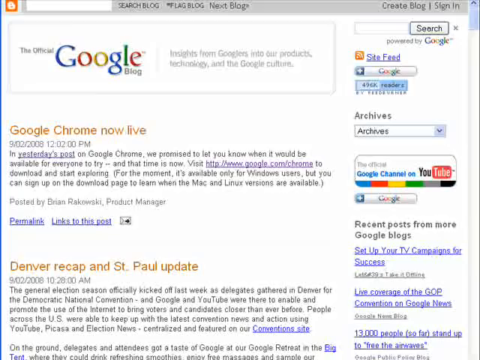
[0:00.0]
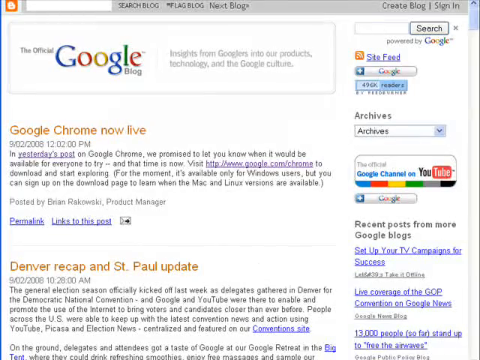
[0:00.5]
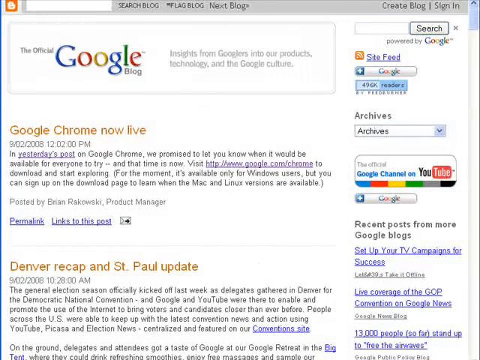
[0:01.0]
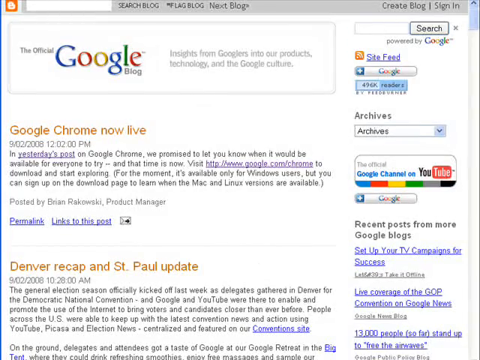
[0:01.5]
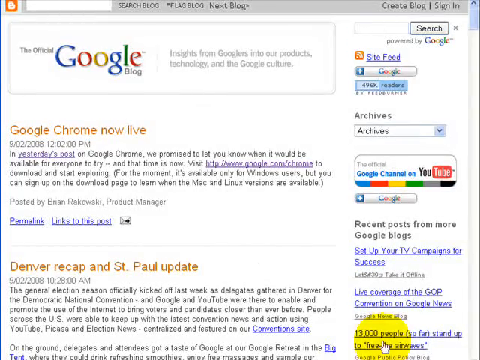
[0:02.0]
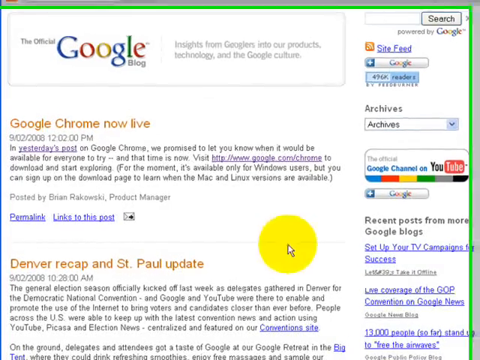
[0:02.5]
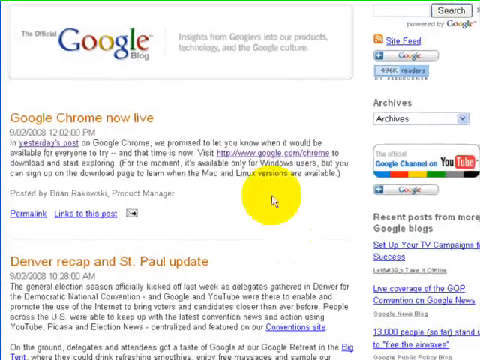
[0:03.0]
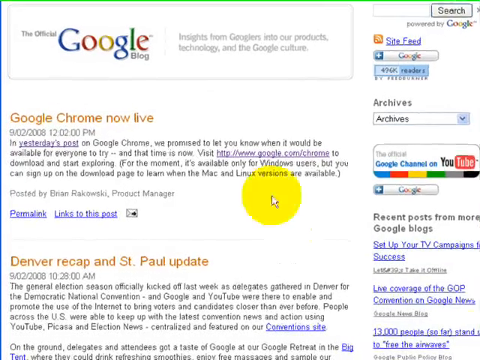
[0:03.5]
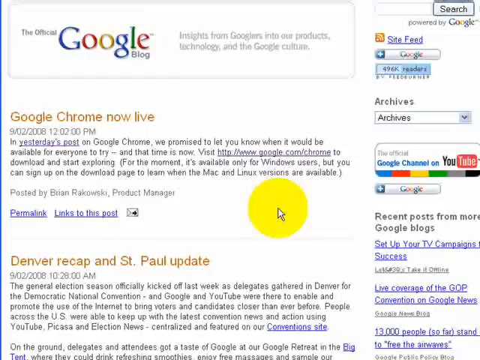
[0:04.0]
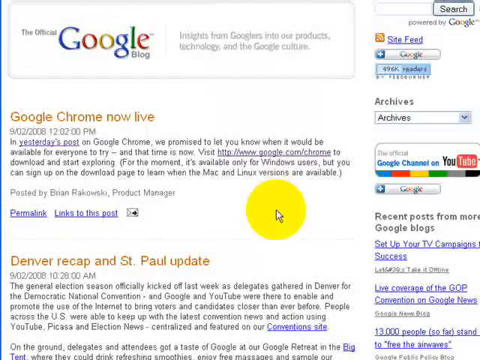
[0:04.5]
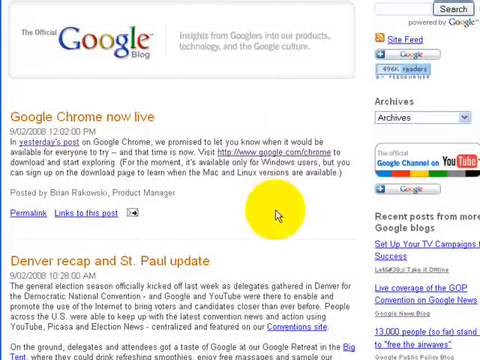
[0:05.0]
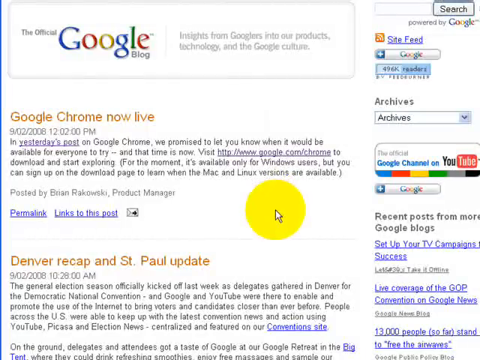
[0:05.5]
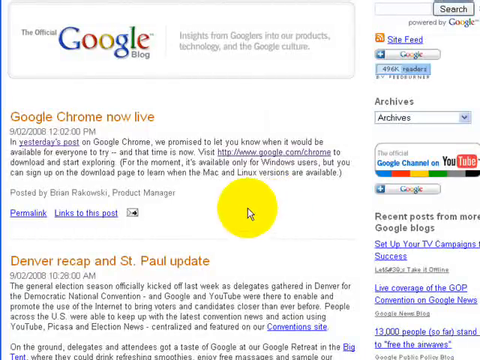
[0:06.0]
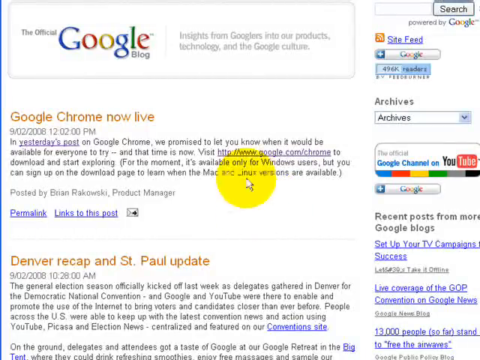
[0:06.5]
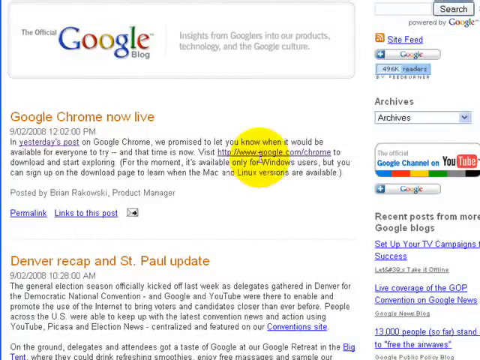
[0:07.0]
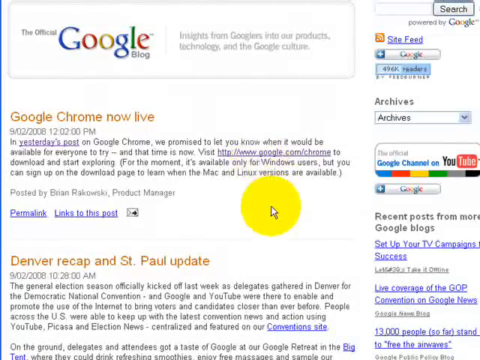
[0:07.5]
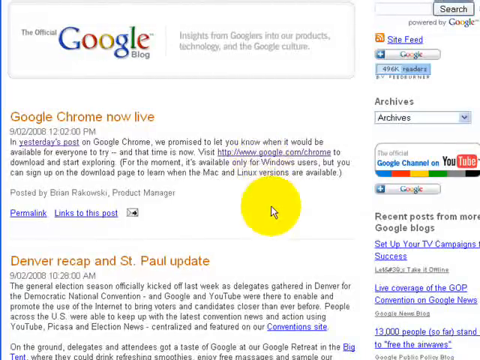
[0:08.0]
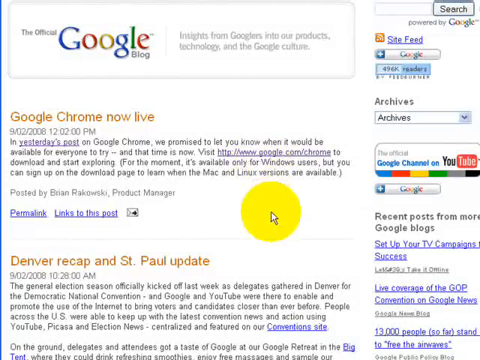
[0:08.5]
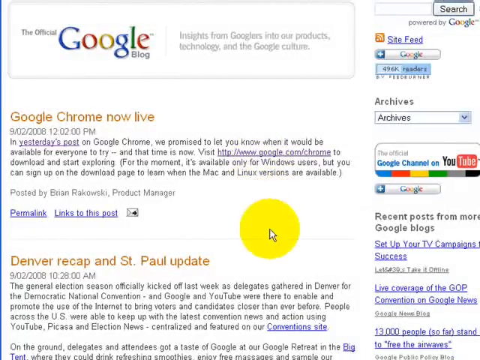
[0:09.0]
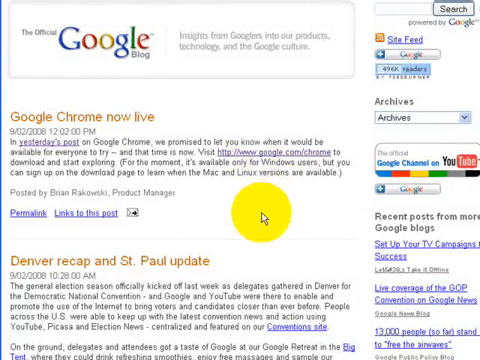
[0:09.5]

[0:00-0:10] A Google search page appears, apparently a search page within Blogger. Text at the top reads "the official Google blog," and the page is possibly someone's personal web page. Posted articles are listed; one is titled "Google Chrome now live" and another "Denver recap and St. Paul update." Links are to the right of the articles. The mouse pointer, which has a large yellow circle around it to make it easier to see, moves around the page. It moves up to a link on the first article, then back down toward the center of the page.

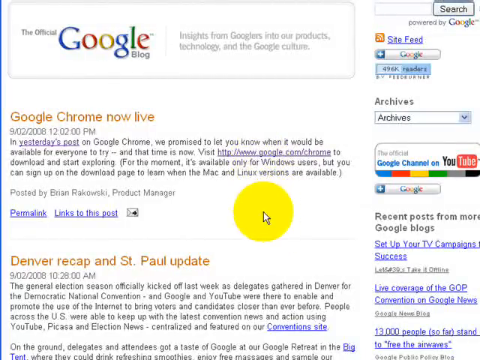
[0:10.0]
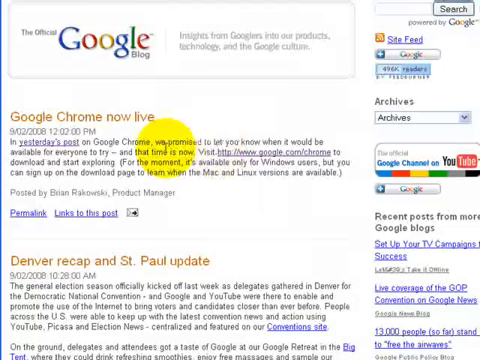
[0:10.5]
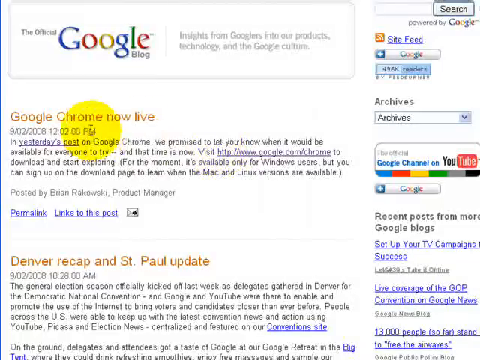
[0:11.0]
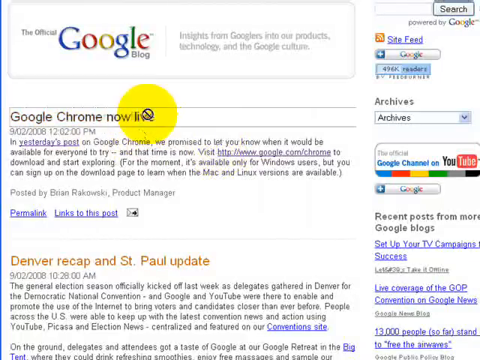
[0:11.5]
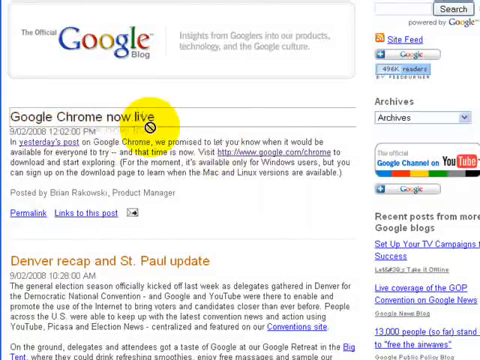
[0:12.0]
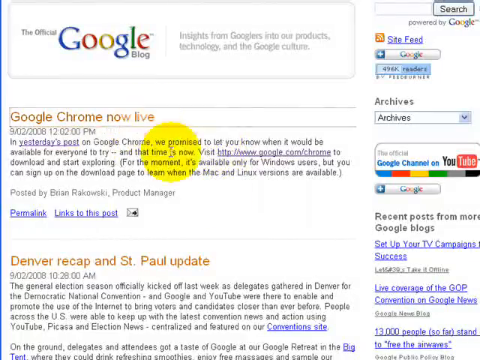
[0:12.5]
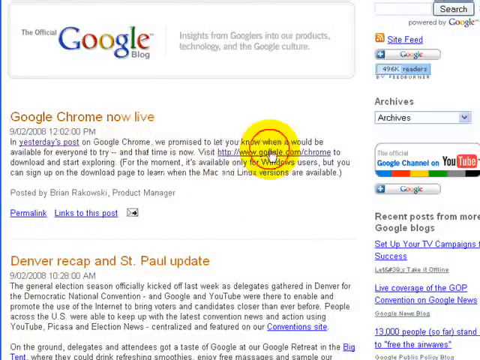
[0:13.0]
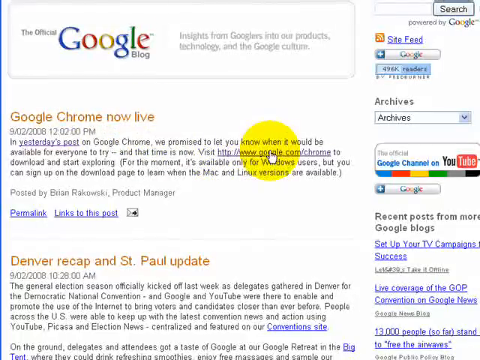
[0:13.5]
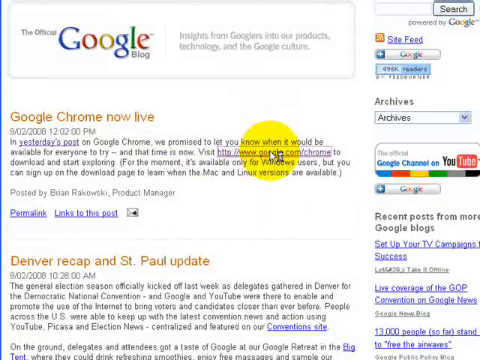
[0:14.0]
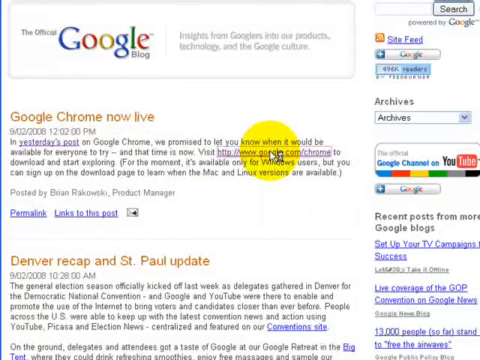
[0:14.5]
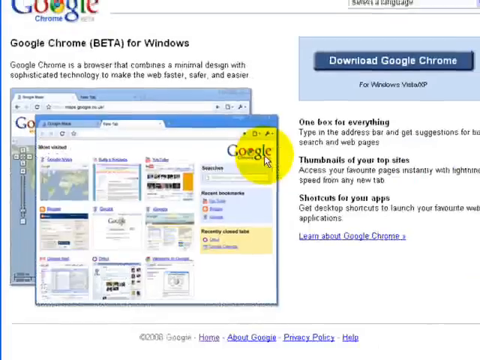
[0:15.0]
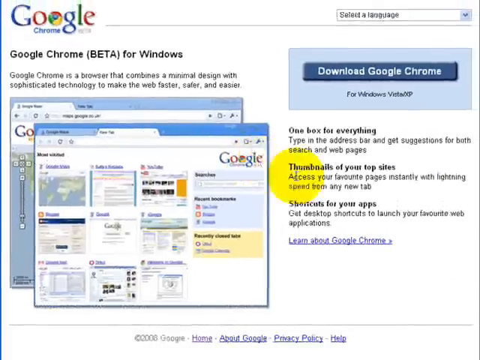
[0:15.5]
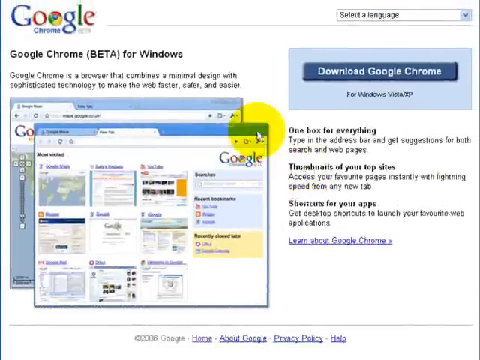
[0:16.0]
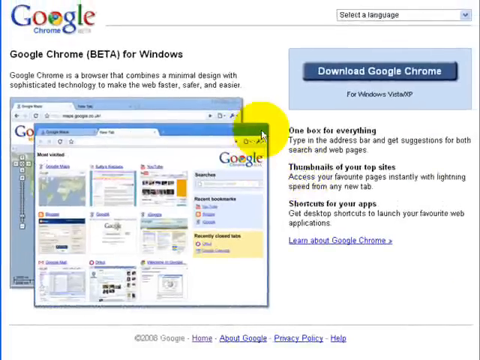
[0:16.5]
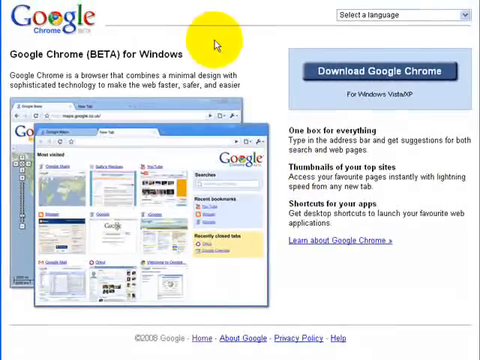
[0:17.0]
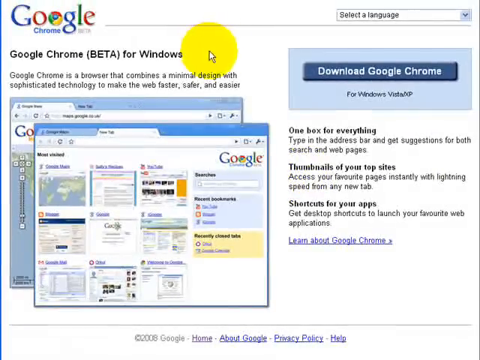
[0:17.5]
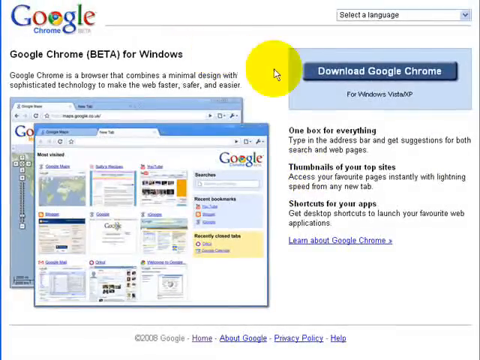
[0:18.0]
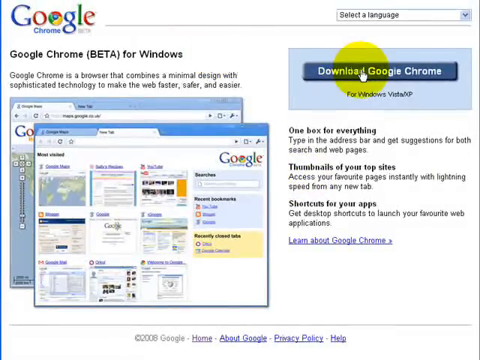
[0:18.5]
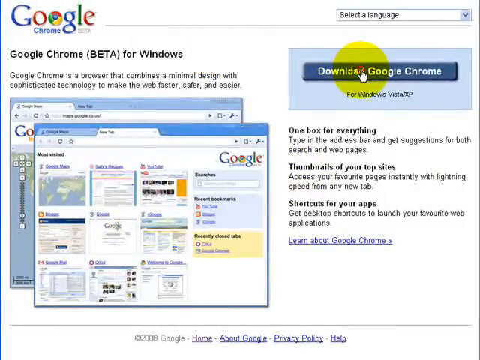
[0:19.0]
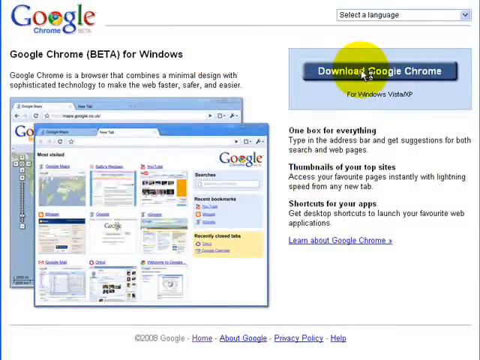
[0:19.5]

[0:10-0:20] The Google Blogger website is shown, apparently the Google Blogger blog; text reads "the official Google blog," and it is hosted on Blogger. Articles are in the center of the page, the first titled "Google Chrome now live." The mouse pointer, circled in a large yellow circle, moves around the page and clicks the "Google Chrome now live" link. This leads to the "Google Chrome beta for Windows" web page, which has a "download Google Chrome now" button in the upper right. The mouse pointer clicks that download button.